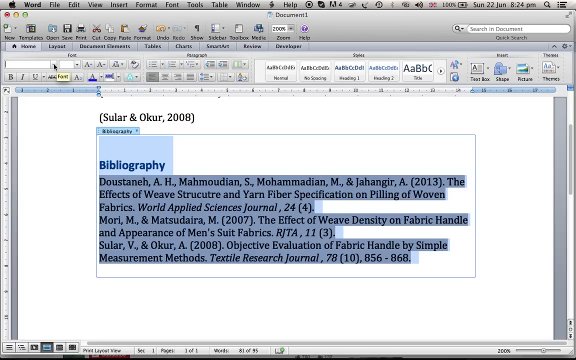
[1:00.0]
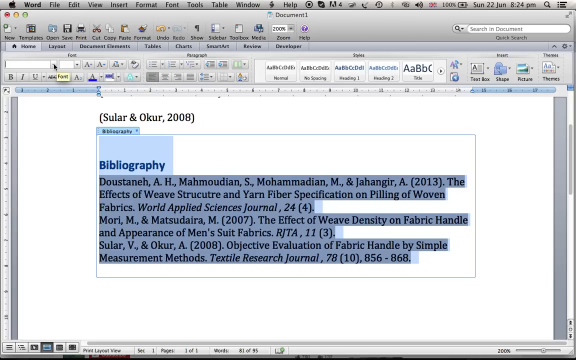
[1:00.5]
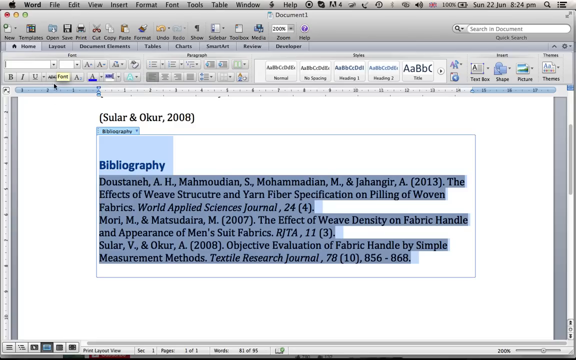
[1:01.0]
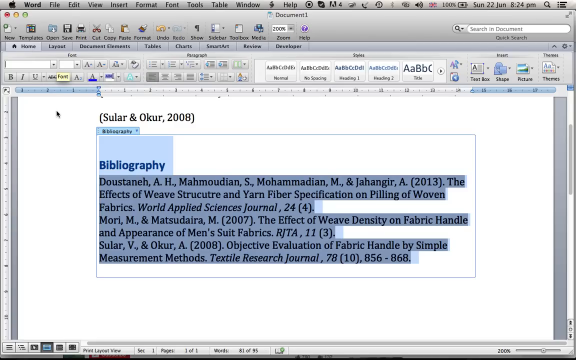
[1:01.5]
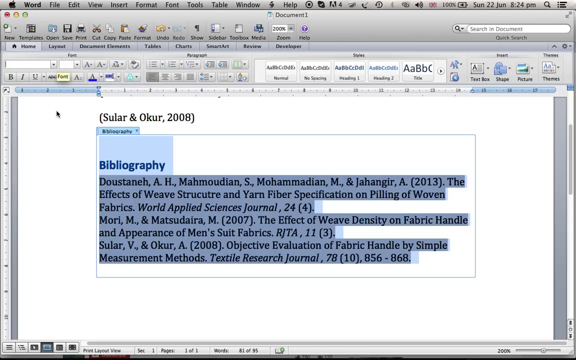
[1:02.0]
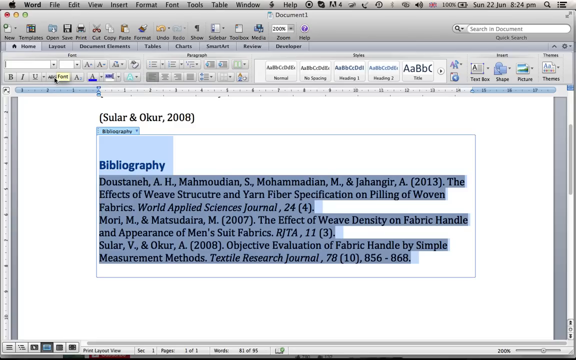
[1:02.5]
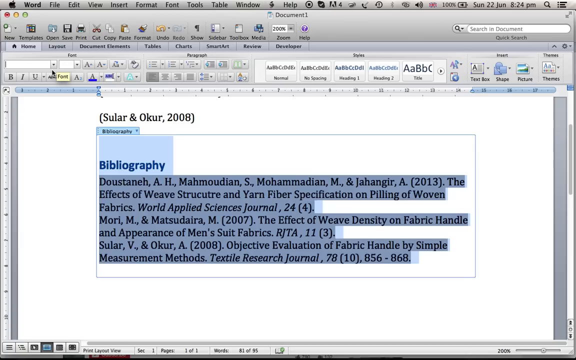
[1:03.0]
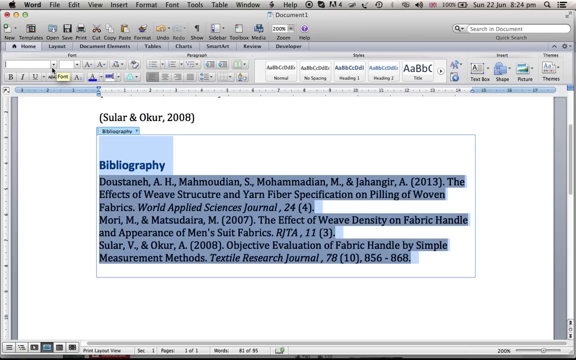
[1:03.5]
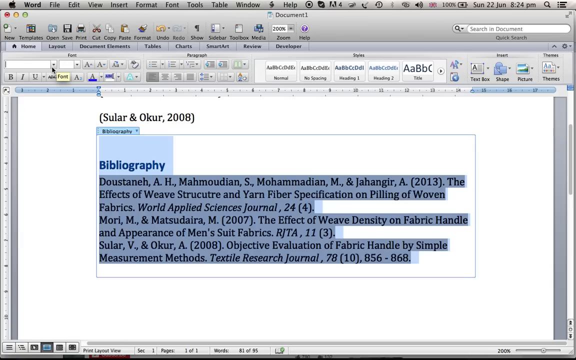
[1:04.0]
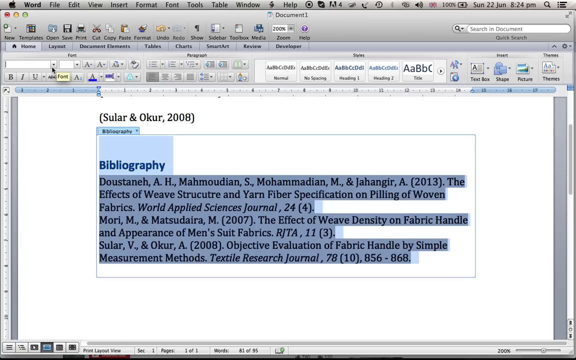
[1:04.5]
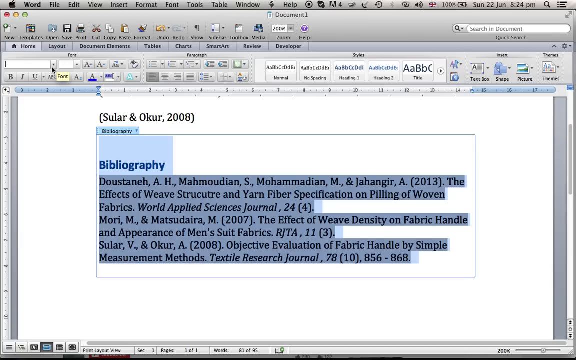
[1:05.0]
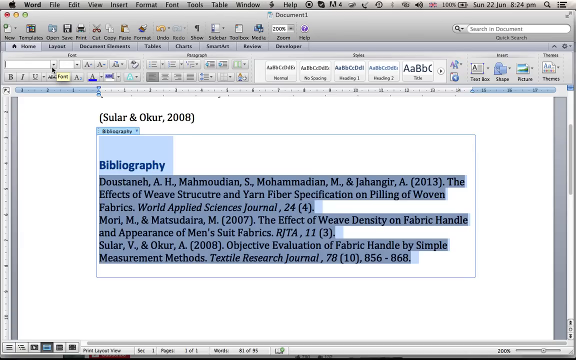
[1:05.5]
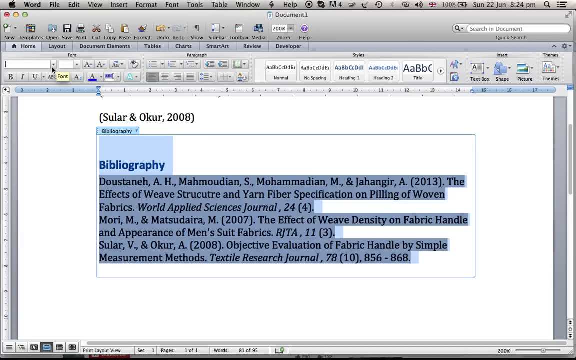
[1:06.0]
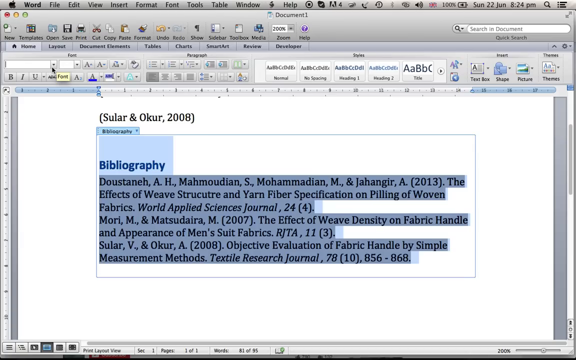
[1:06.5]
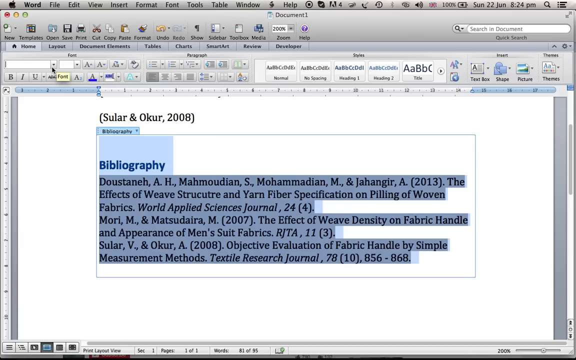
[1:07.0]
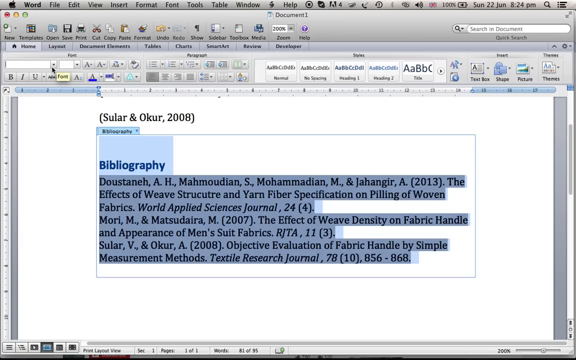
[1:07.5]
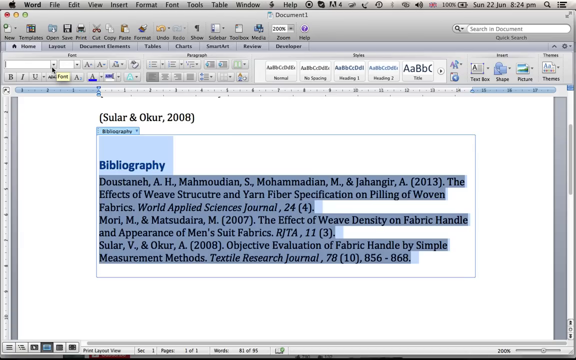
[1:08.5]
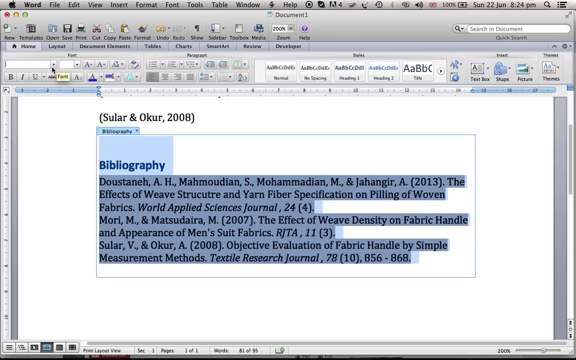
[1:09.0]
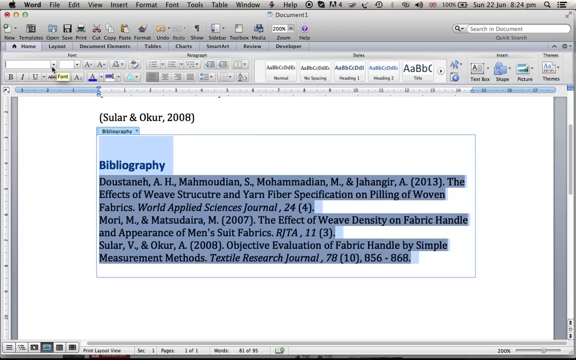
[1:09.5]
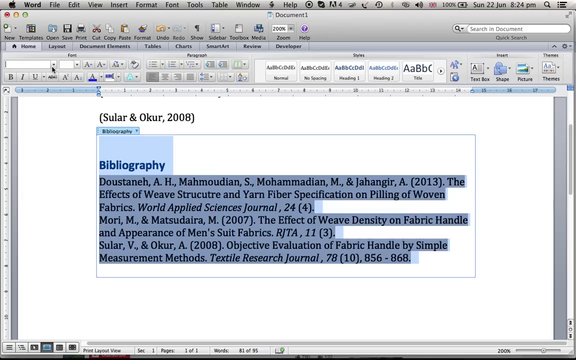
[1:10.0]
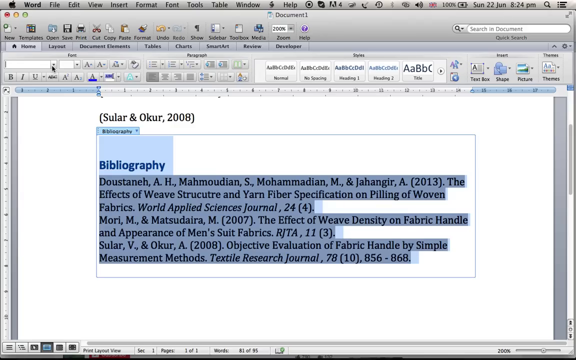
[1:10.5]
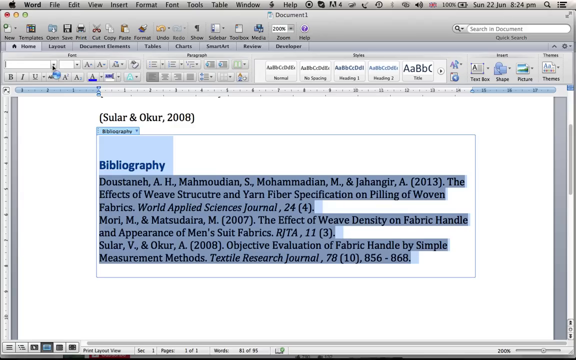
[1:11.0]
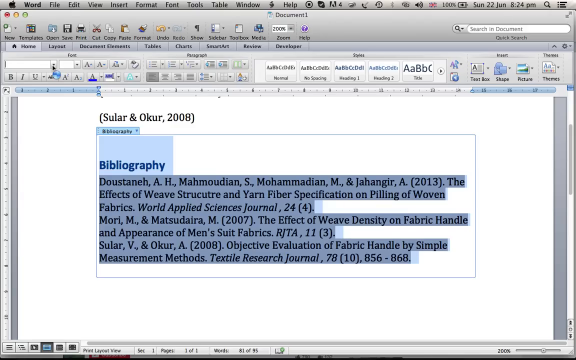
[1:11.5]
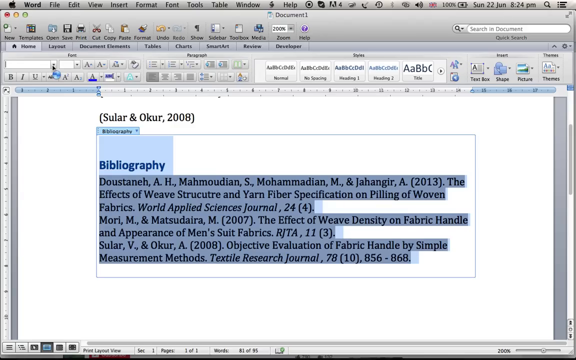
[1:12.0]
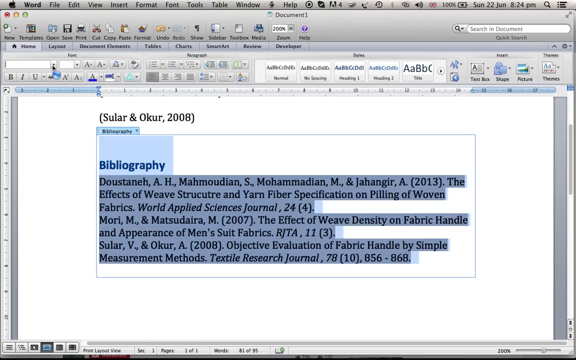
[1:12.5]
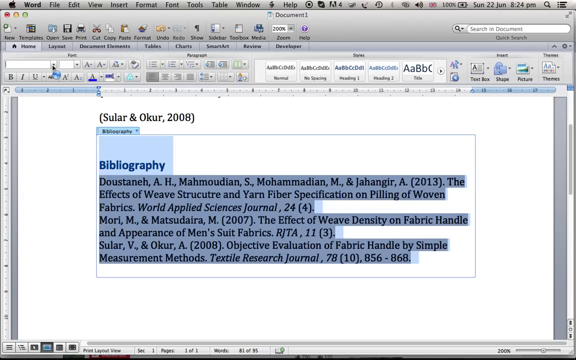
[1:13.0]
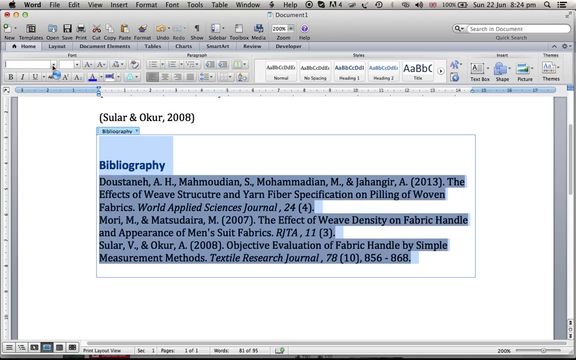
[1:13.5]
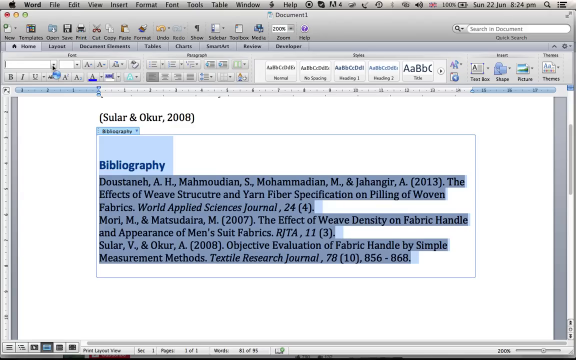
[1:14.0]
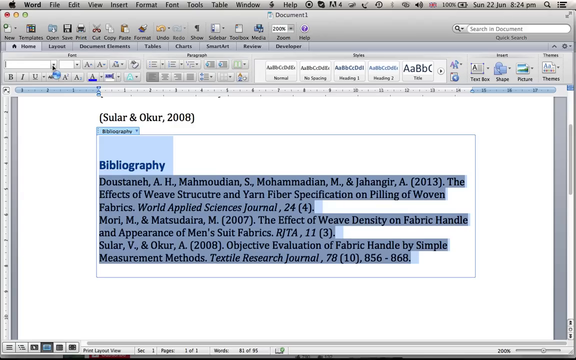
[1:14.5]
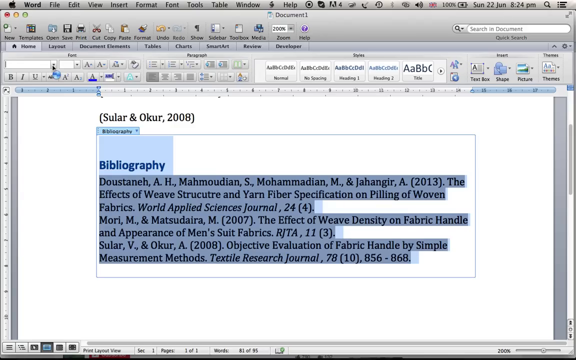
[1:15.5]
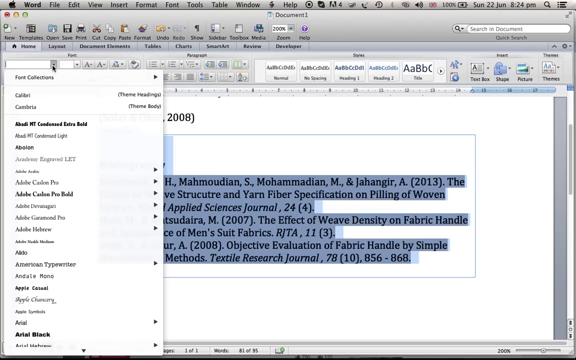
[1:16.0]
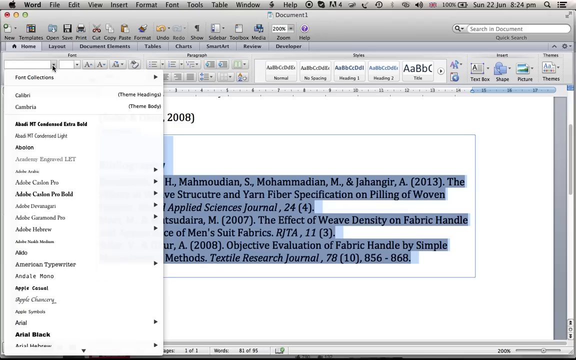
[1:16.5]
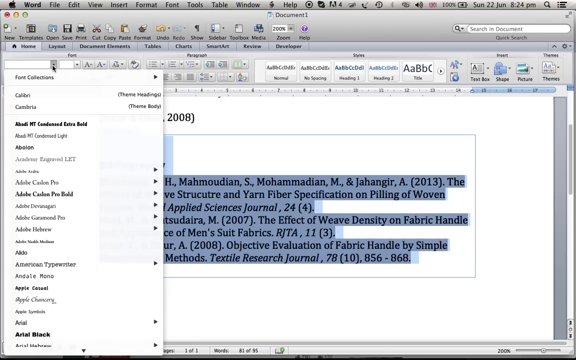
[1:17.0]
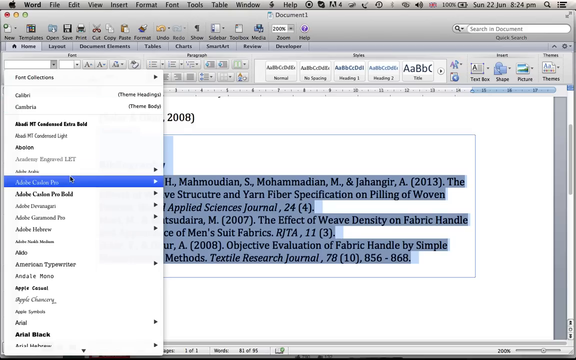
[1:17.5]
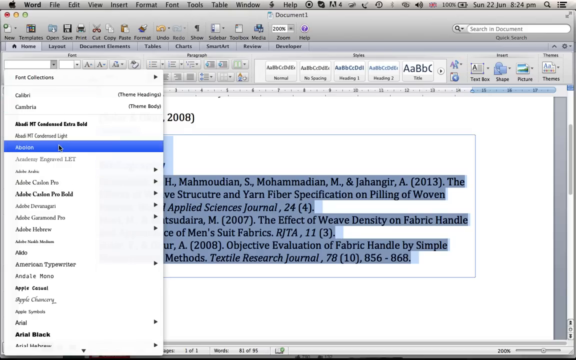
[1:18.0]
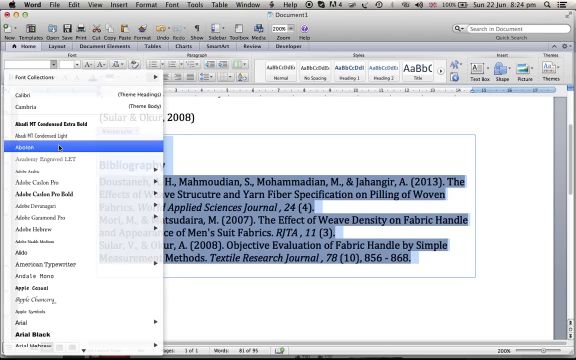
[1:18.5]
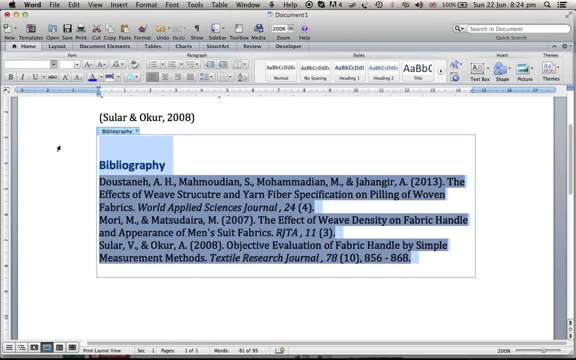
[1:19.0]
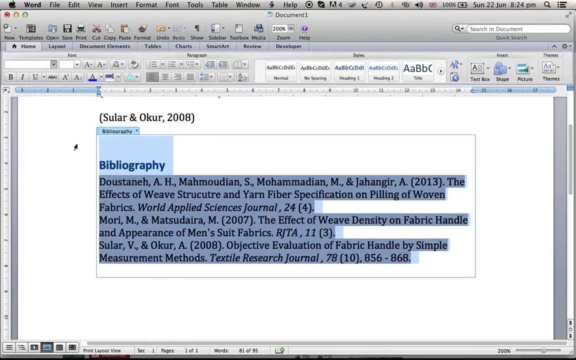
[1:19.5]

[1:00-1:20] The person goes to Fonts, clicks, and moves the cursor around there without choosing a font yet. The view zooms out. The person presses, the fonts appear and then disappear, and the person presses again. The font chosen is Avalon, and all the text is changed into the Avalon font.